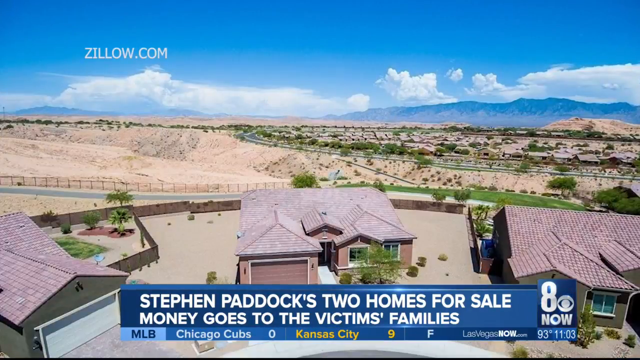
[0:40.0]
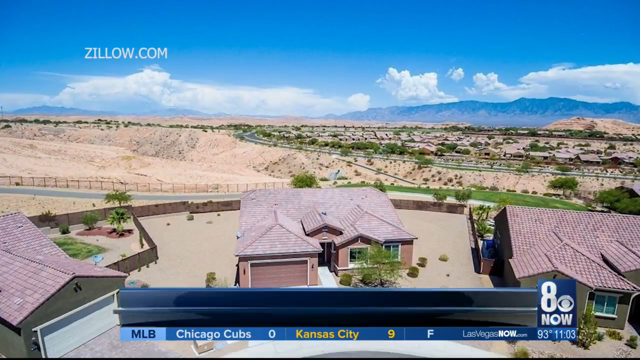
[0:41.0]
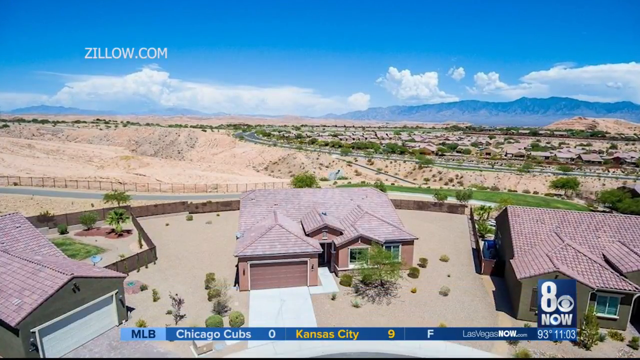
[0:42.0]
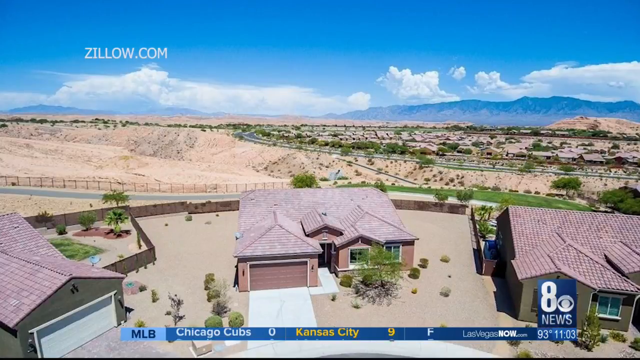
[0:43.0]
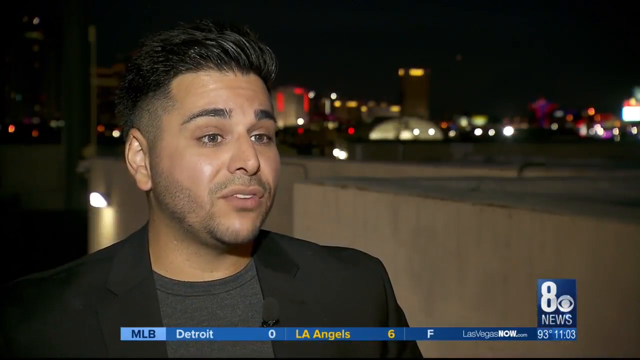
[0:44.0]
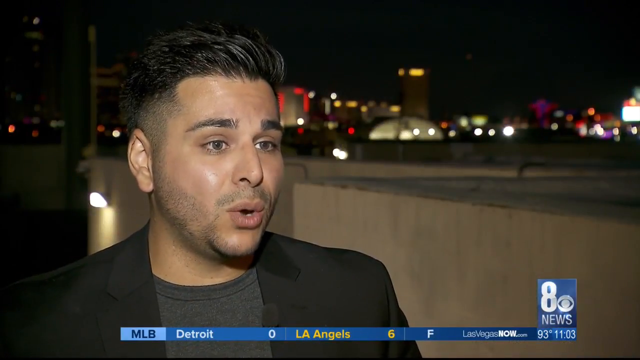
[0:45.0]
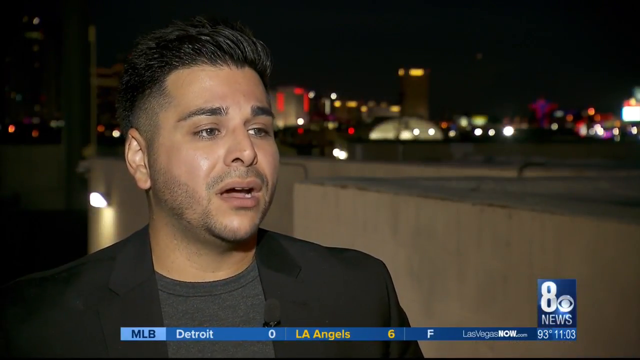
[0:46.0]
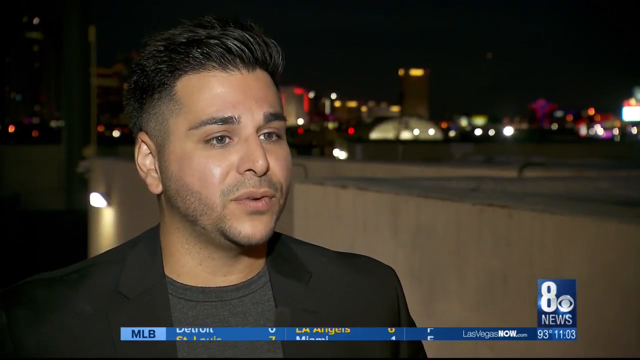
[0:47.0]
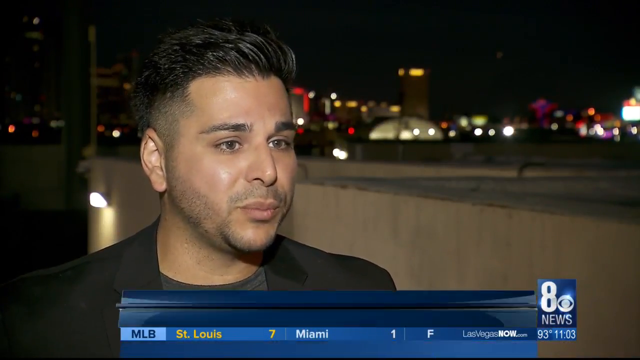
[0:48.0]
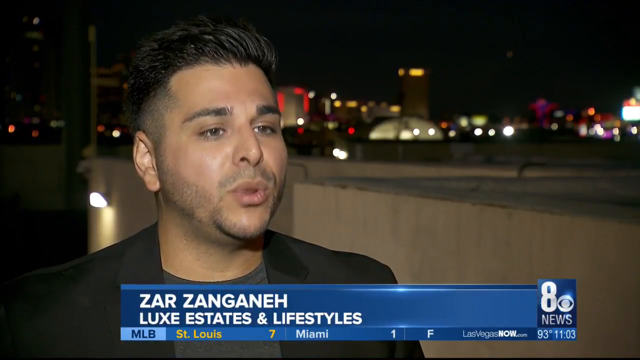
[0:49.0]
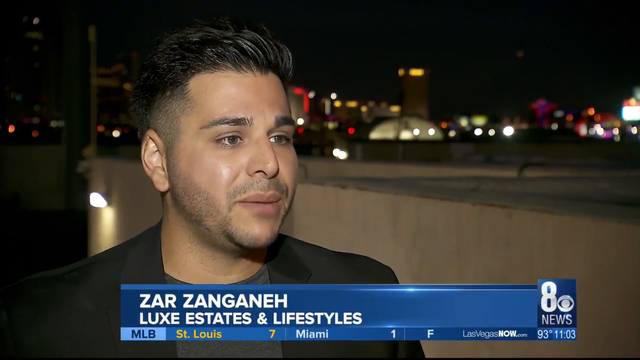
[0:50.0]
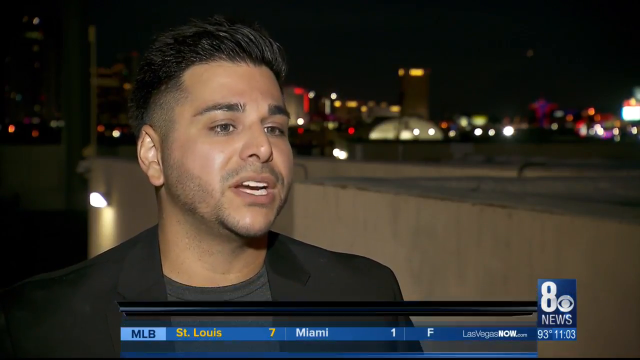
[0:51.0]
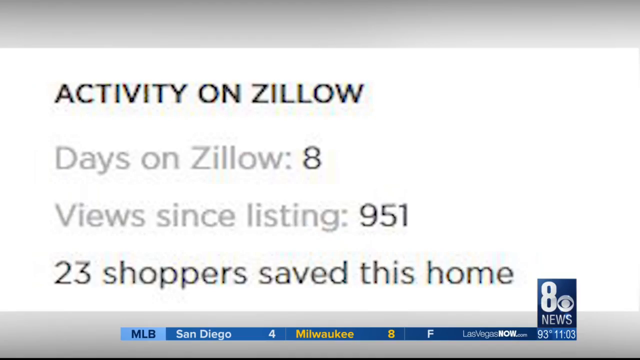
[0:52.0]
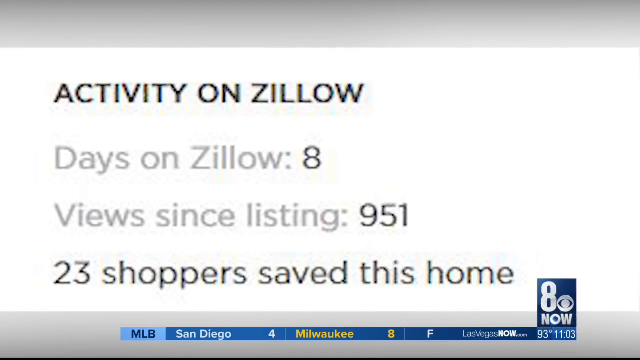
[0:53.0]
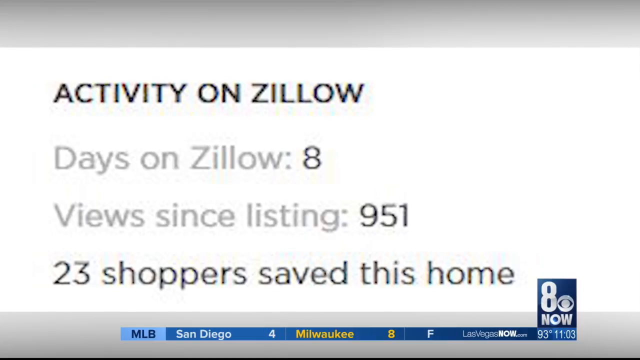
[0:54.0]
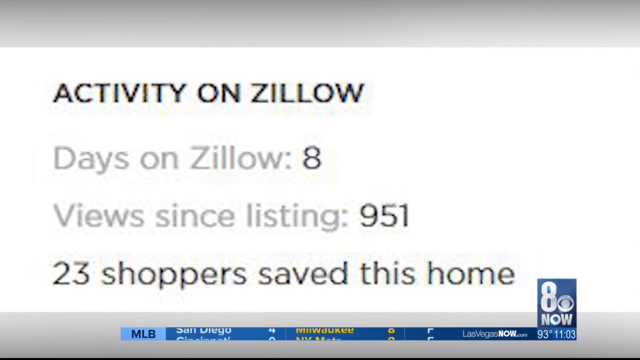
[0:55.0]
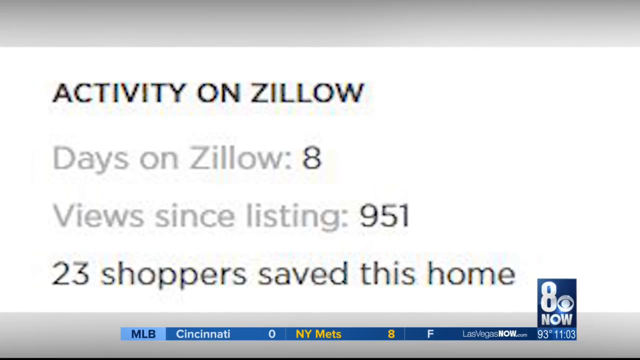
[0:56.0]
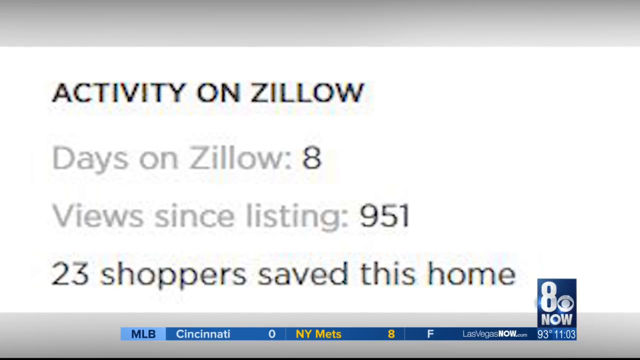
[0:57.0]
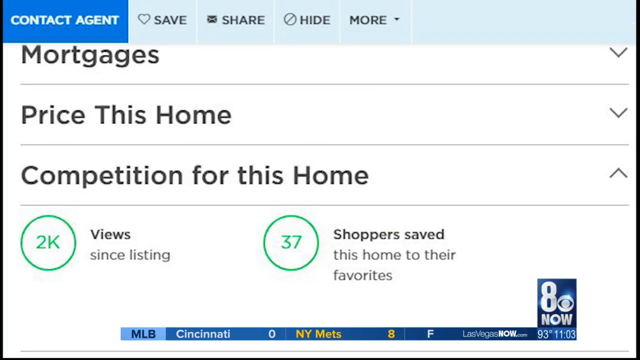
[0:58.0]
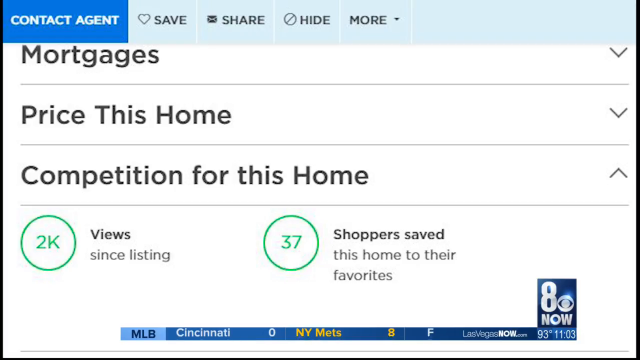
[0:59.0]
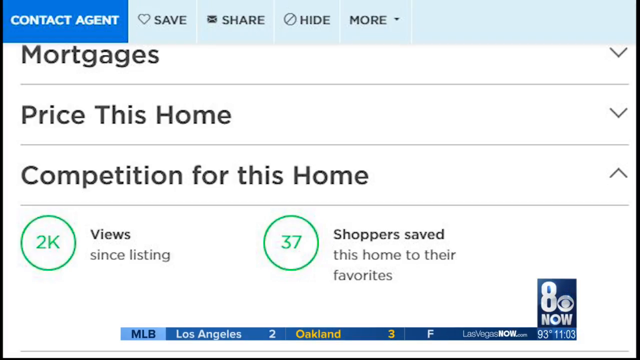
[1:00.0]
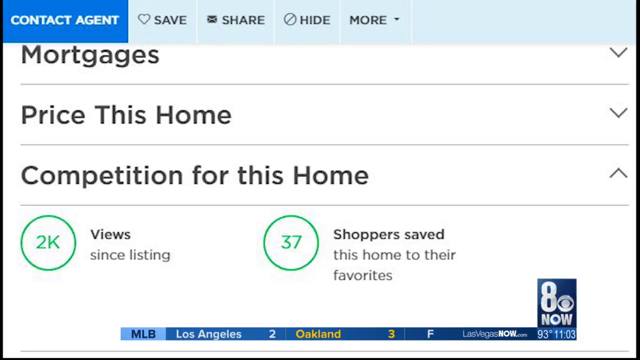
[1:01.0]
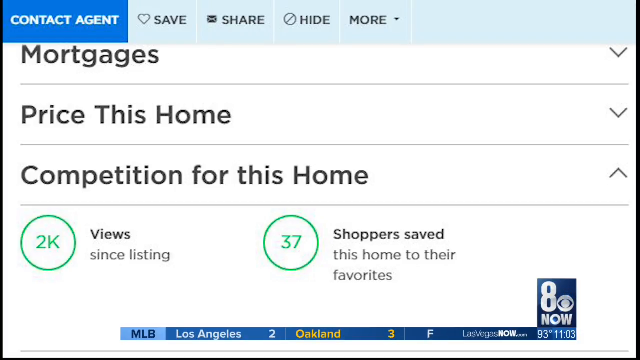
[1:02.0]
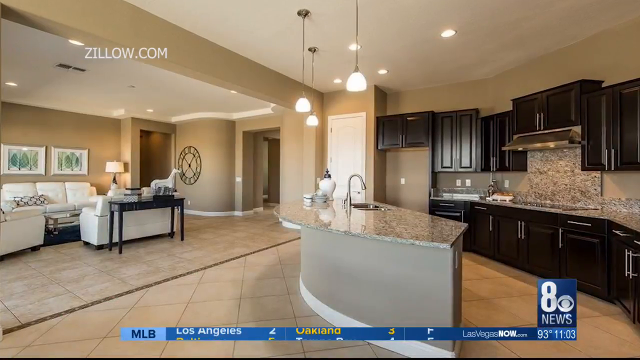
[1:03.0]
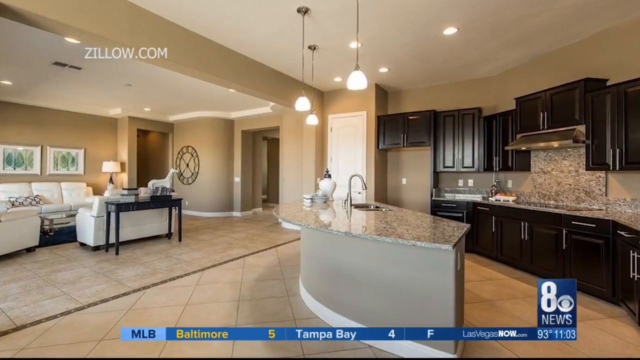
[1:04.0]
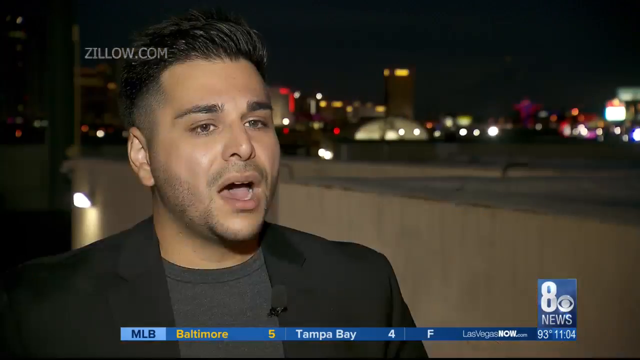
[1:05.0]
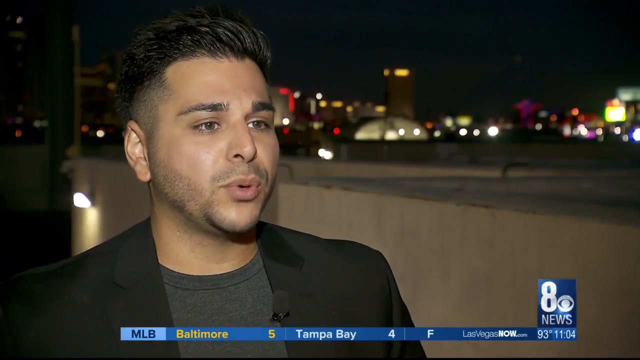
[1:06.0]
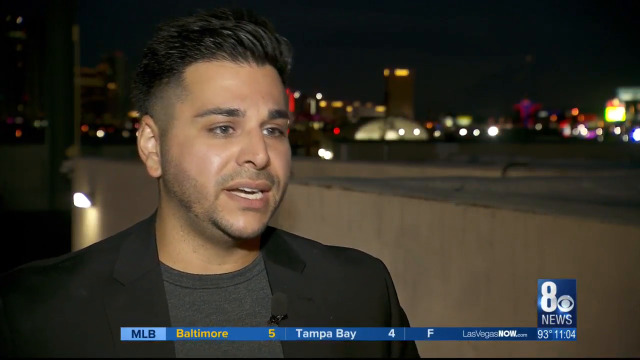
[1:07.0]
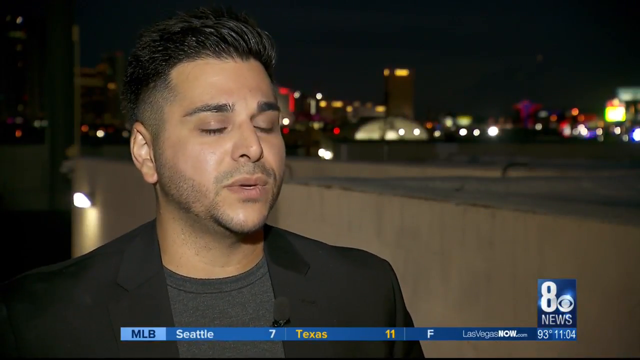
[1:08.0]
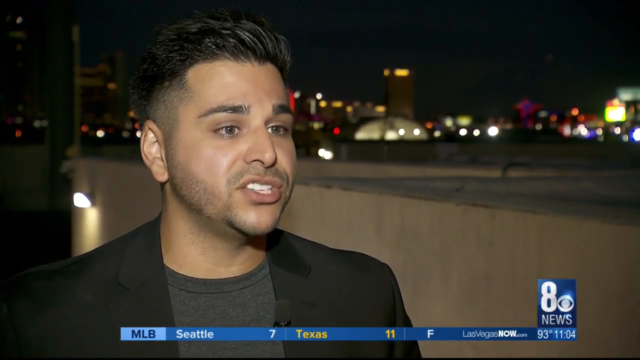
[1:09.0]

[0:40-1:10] The news heading at the bottom reads "Stephen Paddock's two homes for sale, money goes to the victims' families". An aerial view shows houses. A man, Zar Zanganeh of Luxe Estate and Lifestyles, speaks in front of the camera. The video moves to an online section titled "activity on Zillow", showing "days on Zillow" as 8, "views since listing" as 951, and "23 shoppers saved this home". Another web page shows "contact agent", "save", "share", "hide" and "more", followed by "mortgages", "price this home" and "competition for this home", with views at 2K and 37 shoppers having saved it. An interior view of the house follows.